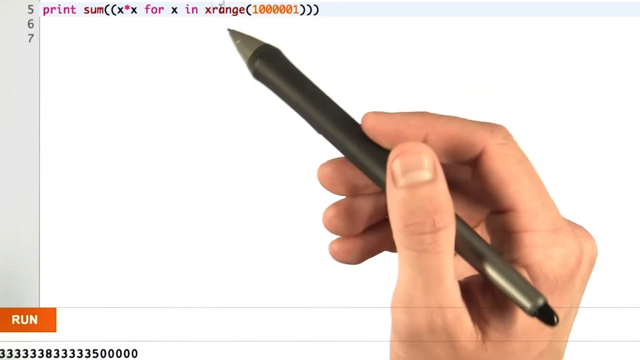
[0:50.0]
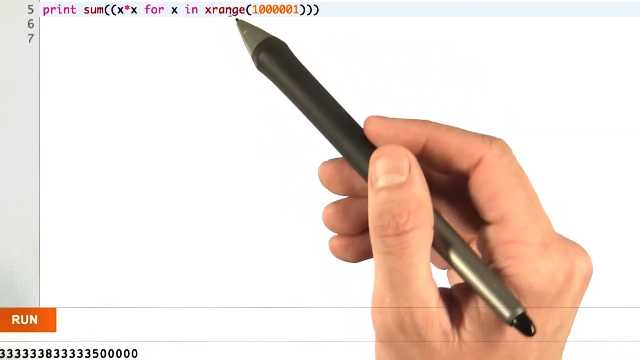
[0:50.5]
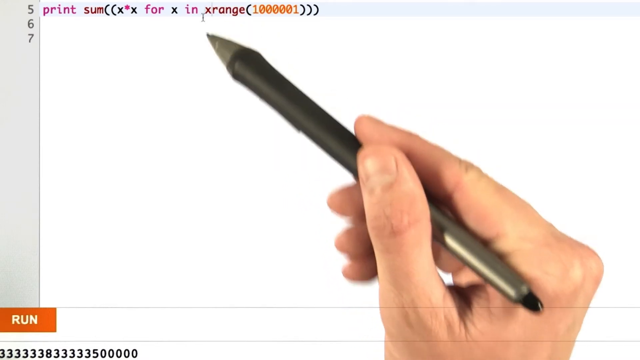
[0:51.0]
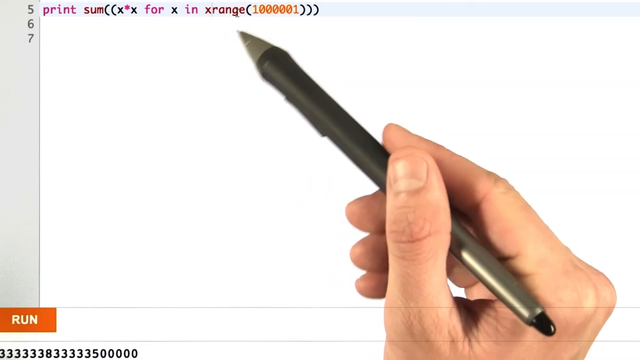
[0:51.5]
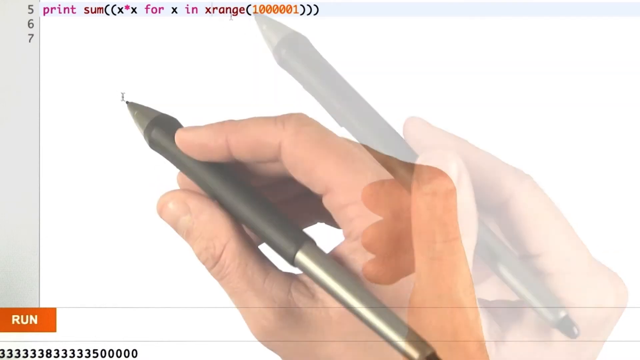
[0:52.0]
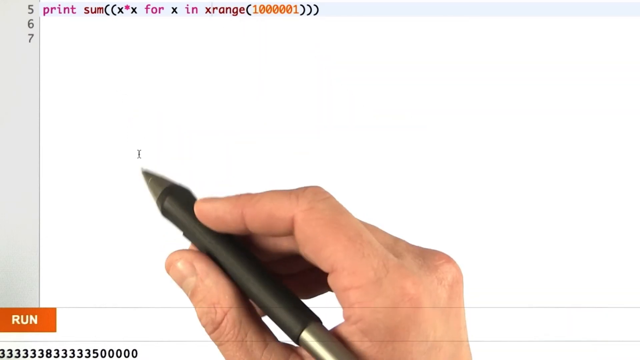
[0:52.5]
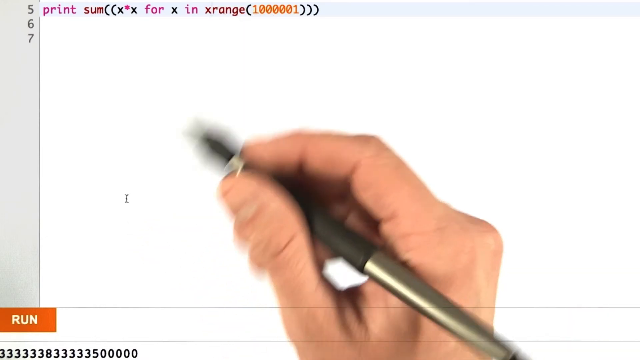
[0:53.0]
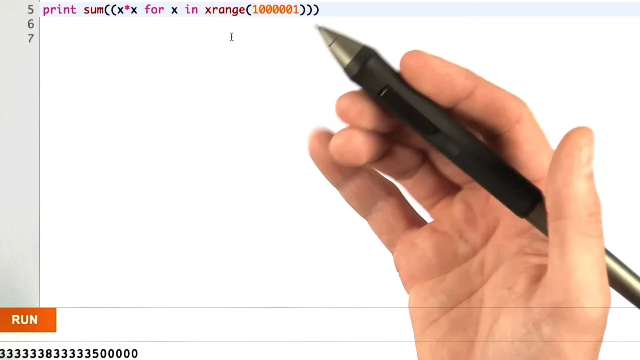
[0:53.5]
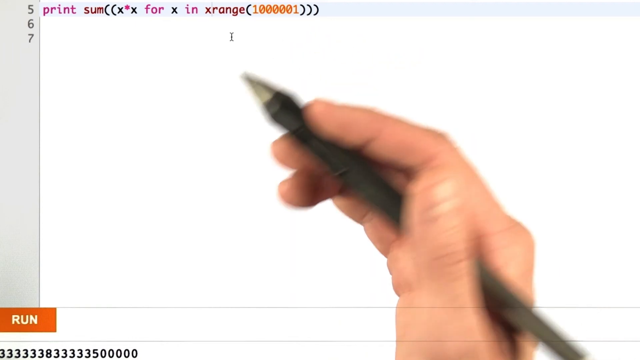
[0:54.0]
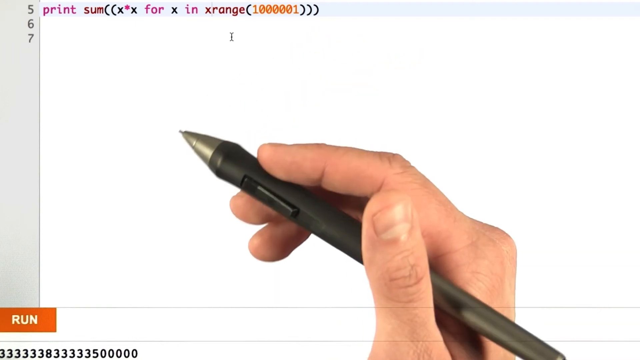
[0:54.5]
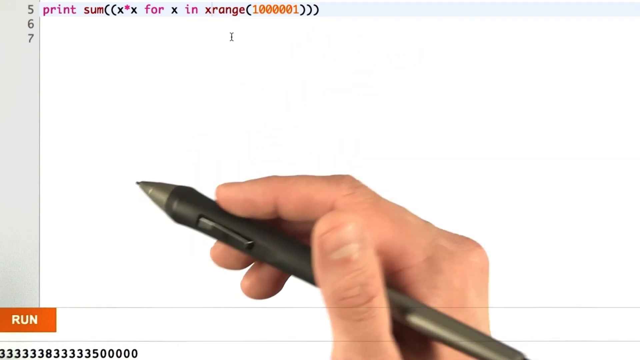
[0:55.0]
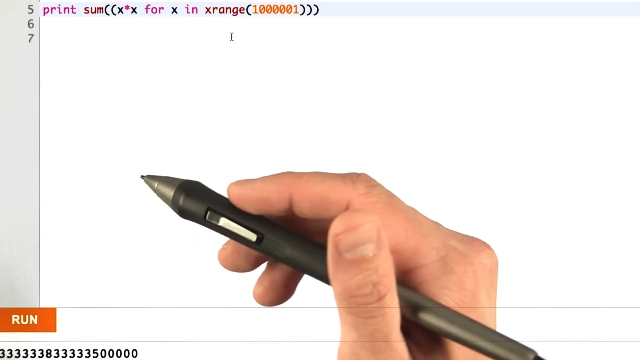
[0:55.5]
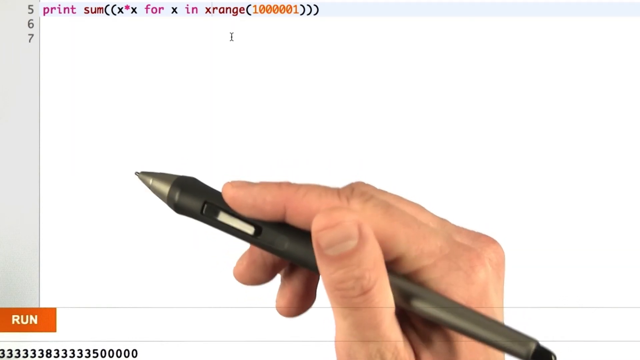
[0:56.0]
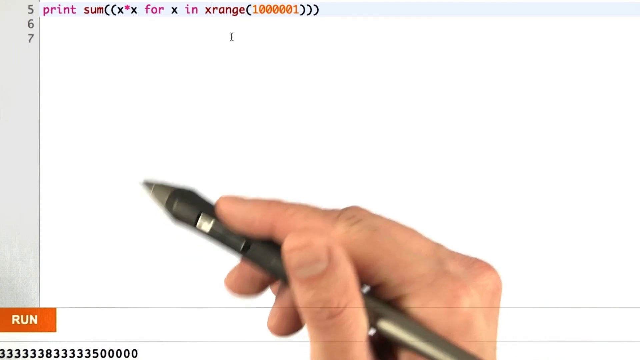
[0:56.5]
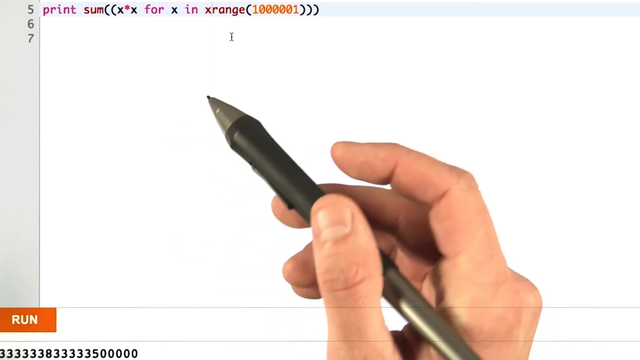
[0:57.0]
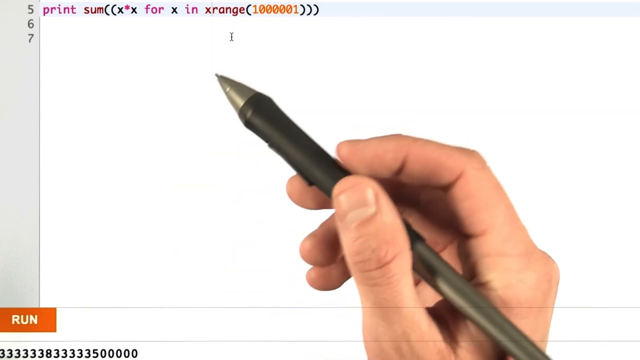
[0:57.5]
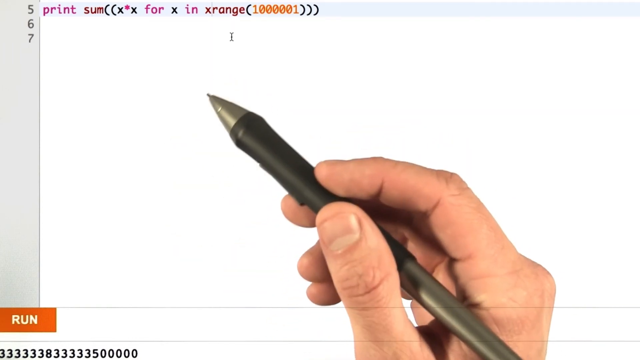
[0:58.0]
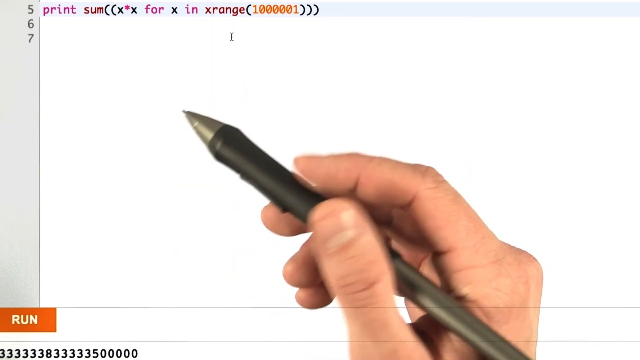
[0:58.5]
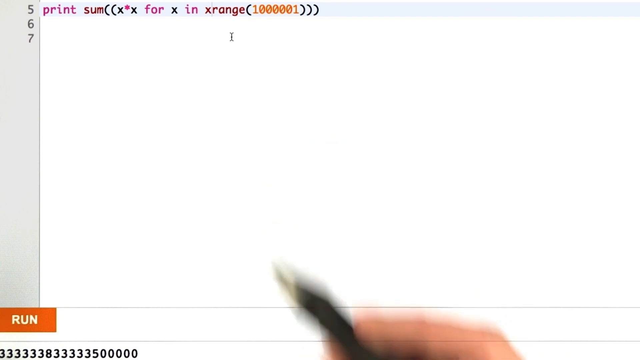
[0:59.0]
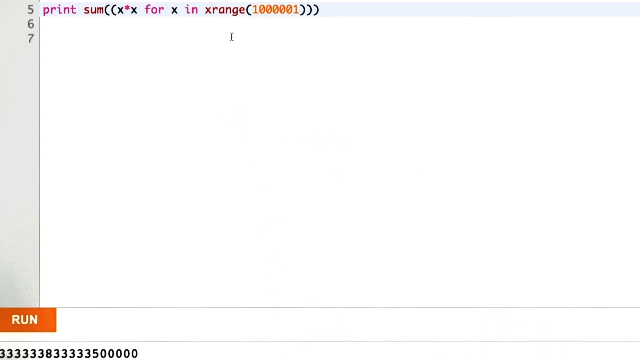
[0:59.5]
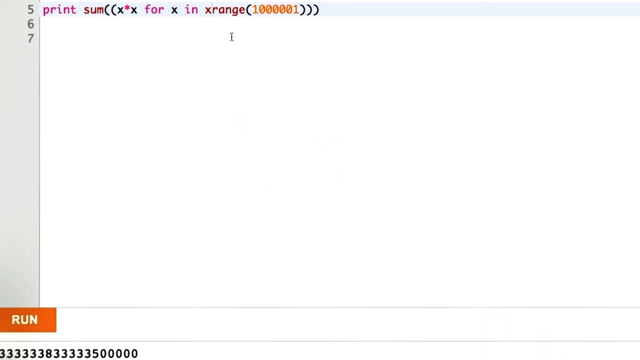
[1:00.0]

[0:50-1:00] The man has already finished line five and is moving on to line six. He moves down to the bottom of the screen, holding his pen.